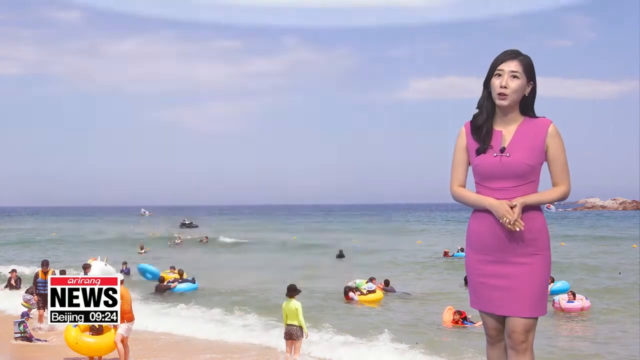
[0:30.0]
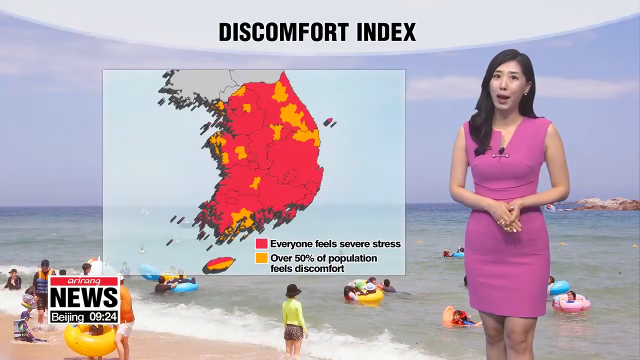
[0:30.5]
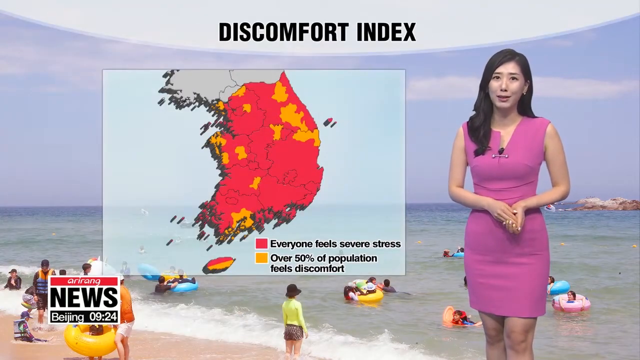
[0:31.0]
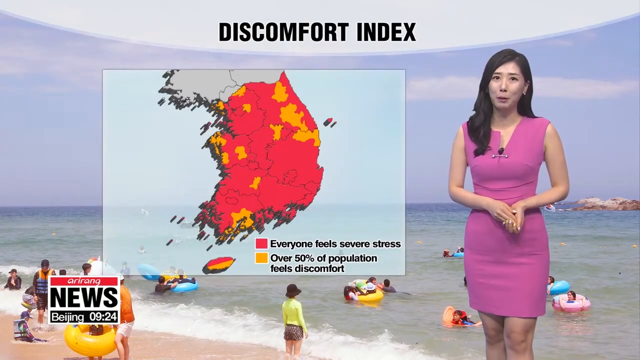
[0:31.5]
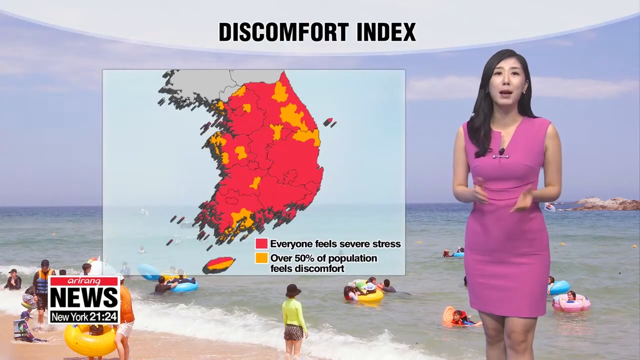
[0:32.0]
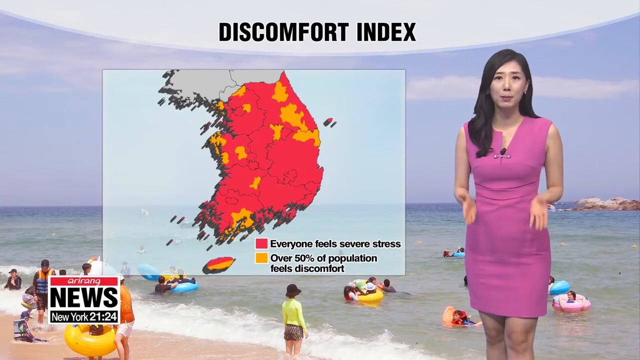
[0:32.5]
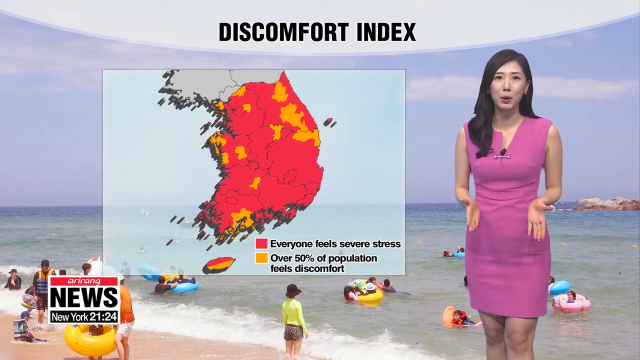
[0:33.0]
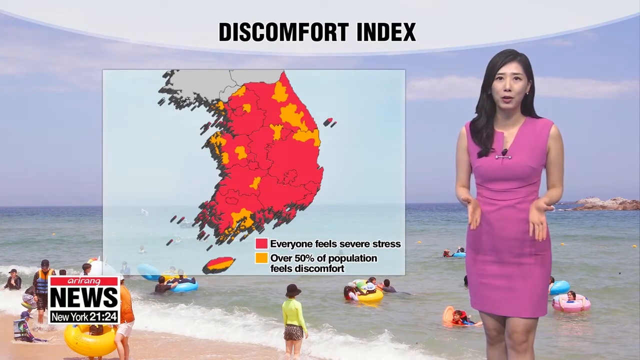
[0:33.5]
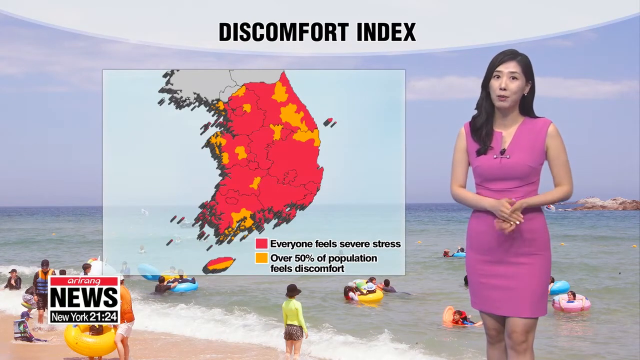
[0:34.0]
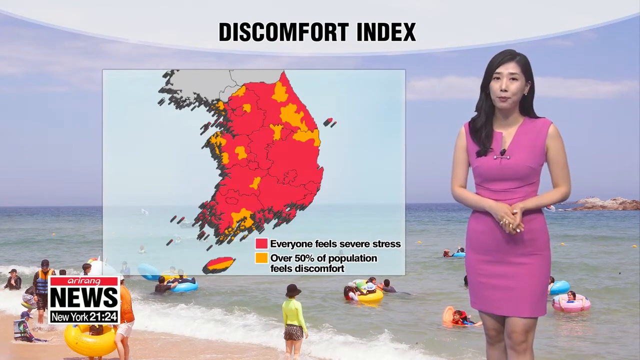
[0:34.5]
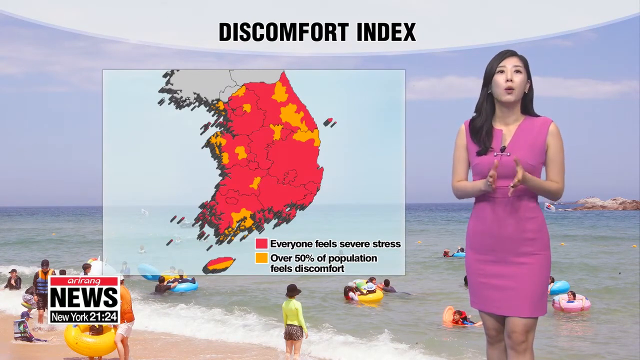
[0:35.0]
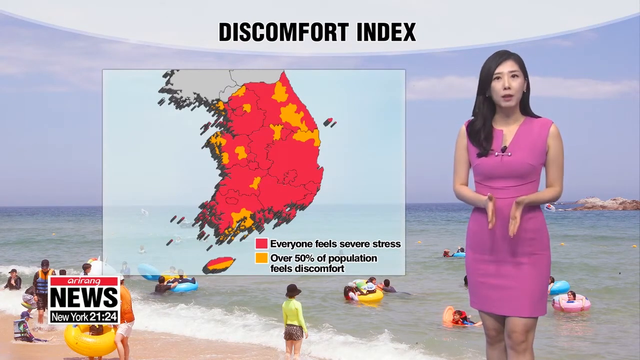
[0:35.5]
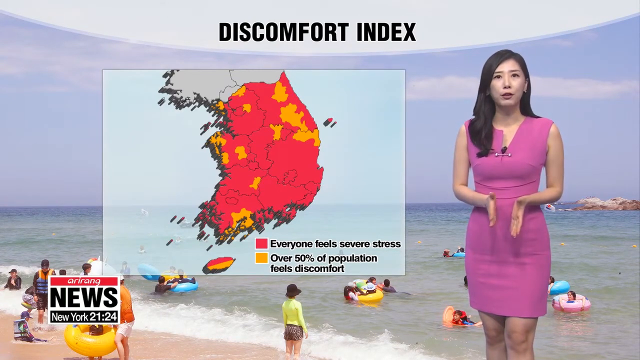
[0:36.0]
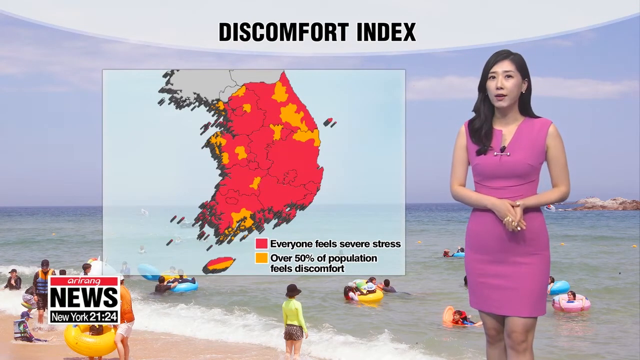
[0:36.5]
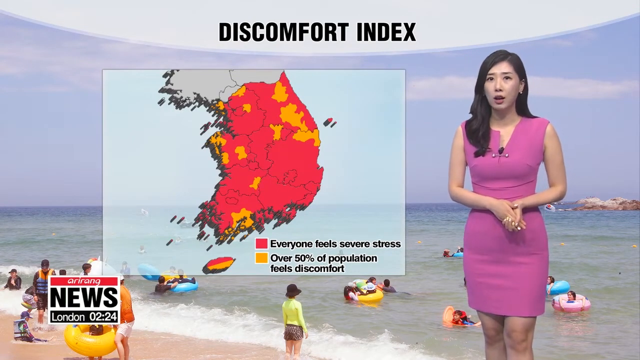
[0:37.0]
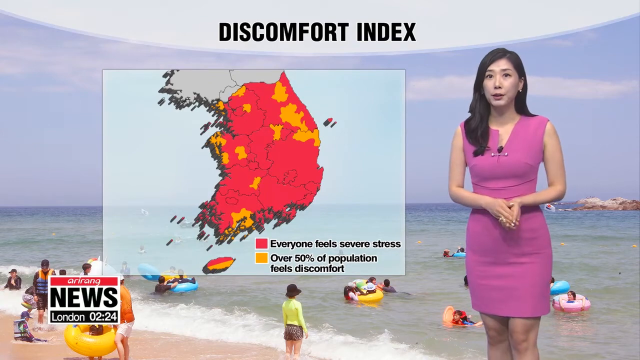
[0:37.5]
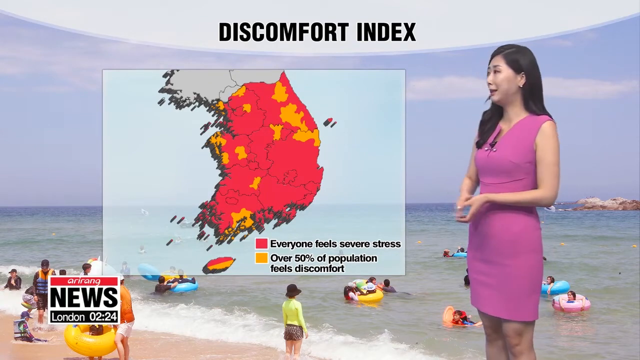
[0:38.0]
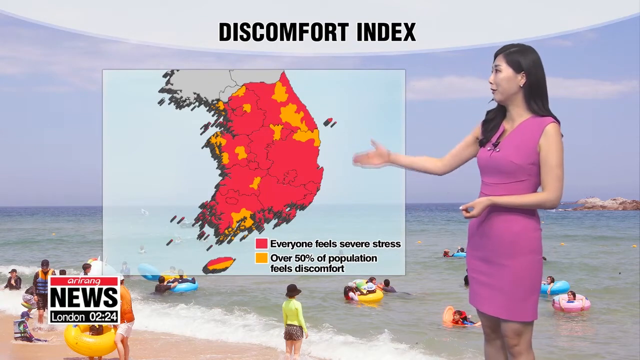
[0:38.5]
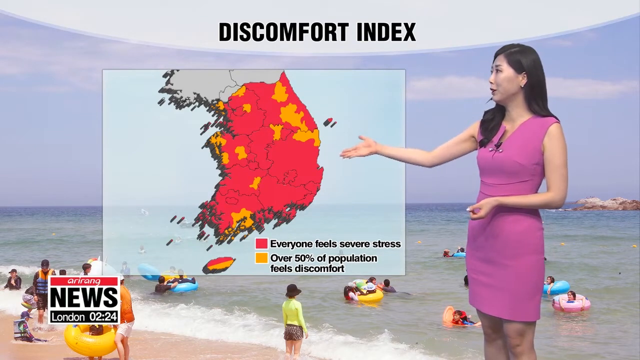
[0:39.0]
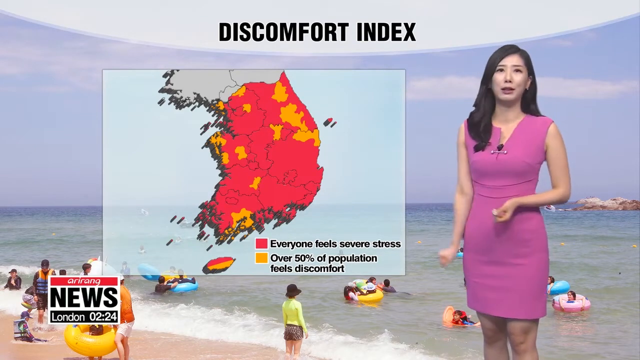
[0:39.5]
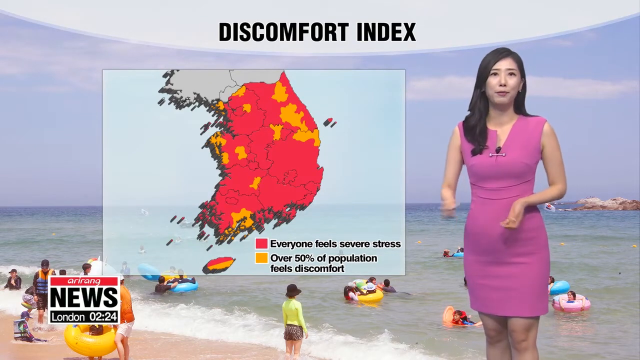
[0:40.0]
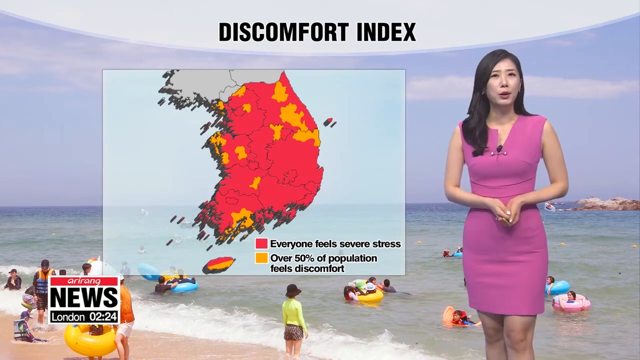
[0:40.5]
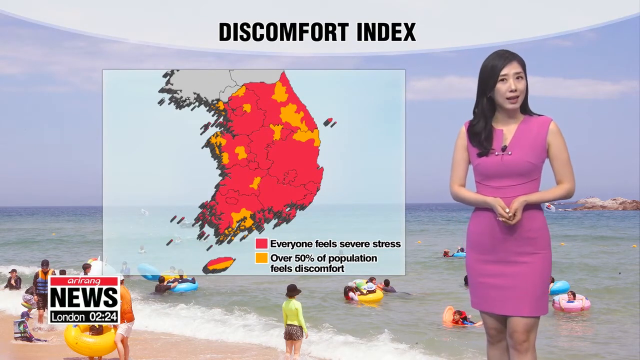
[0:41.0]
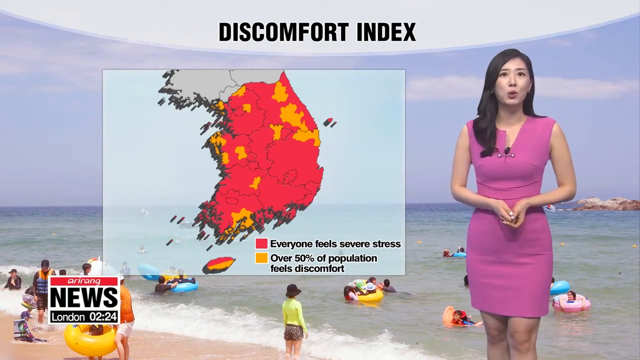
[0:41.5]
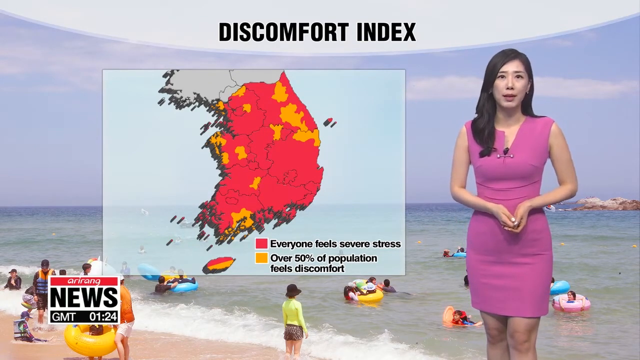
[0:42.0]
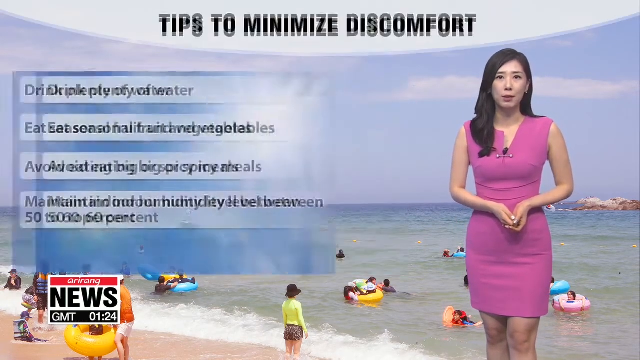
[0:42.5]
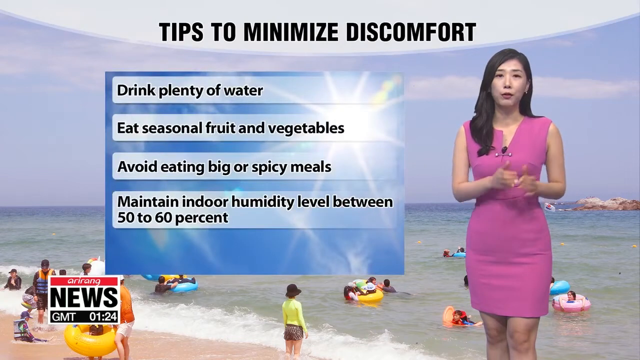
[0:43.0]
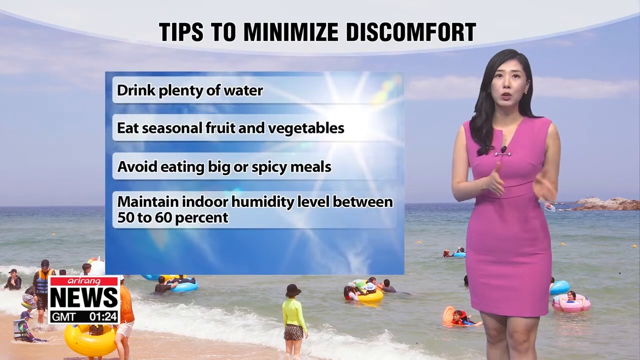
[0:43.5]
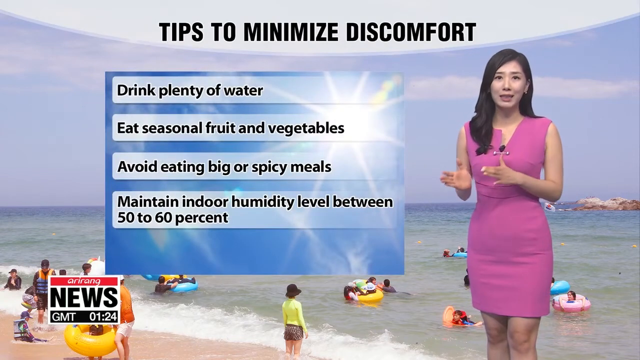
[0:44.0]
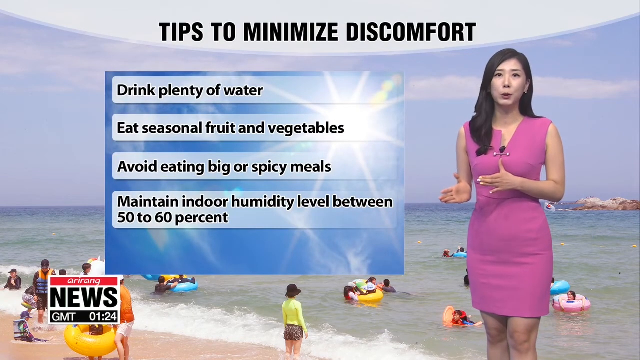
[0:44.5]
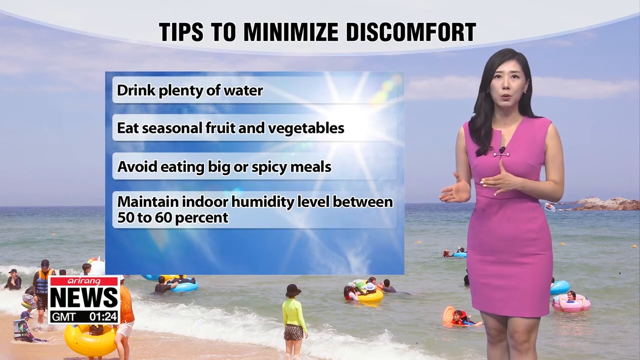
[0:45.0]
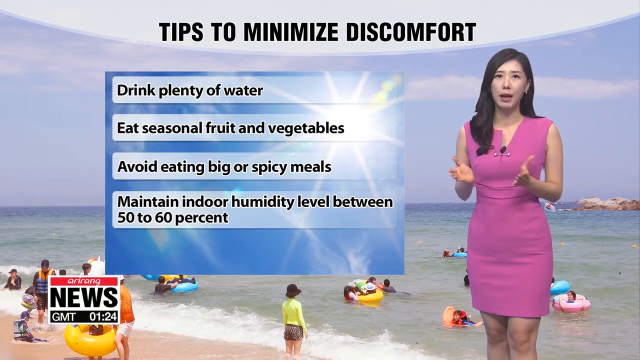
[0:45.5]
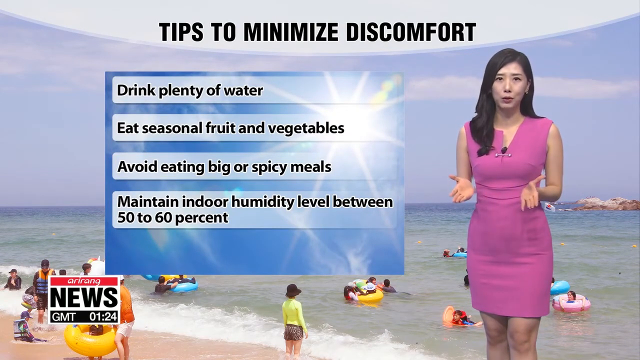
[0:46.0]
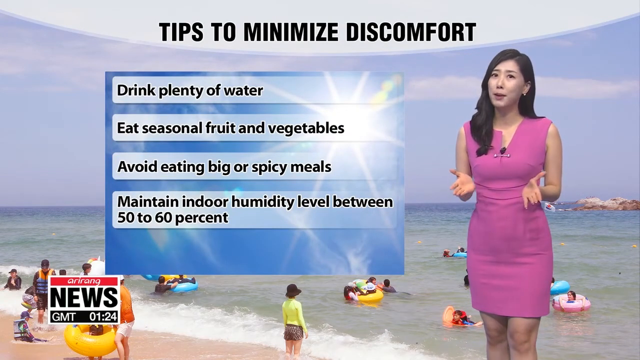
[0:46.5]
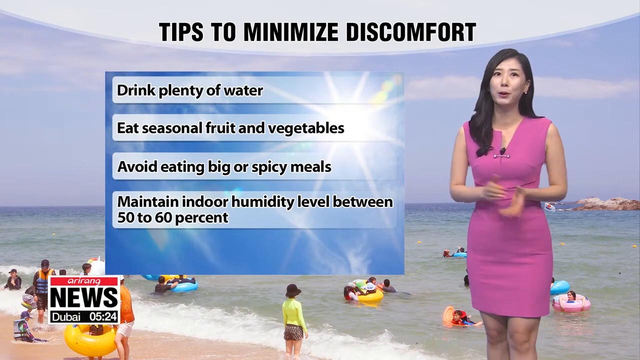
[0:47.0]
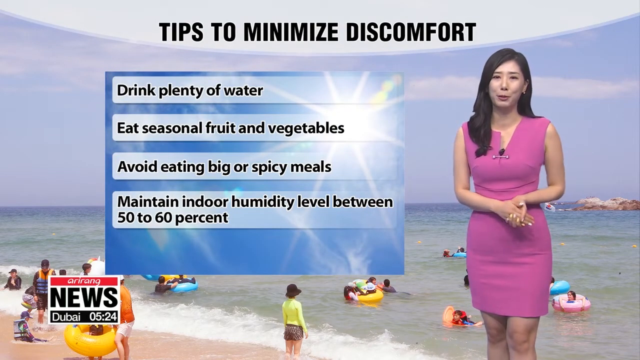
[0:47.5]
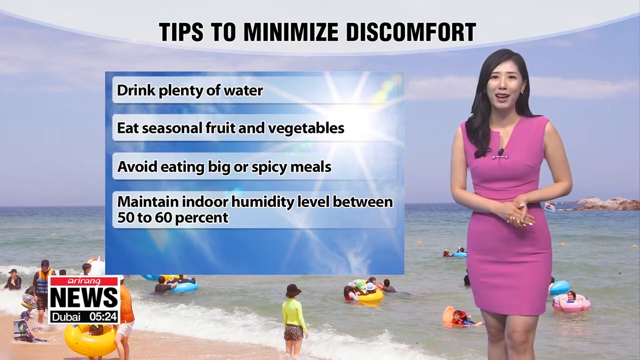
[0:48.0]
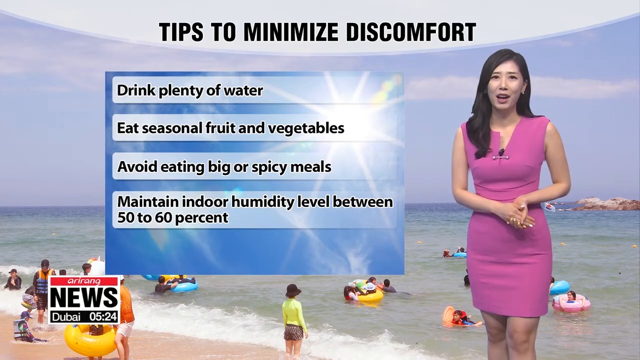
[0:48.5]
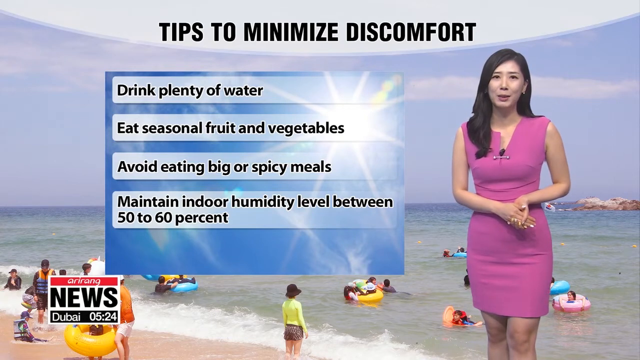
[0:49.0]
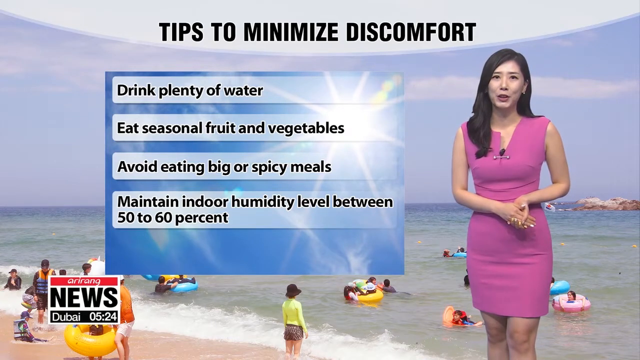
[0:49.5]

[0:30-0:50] The woman with long black hair wears a pink dress with a mic attached to it. She stands, and in the background people at a beach appear to be swimming; some are walking and some are in the water swimming with life jackets. A weather forecast shows the heading "discomfort index" in bold black, with areas of red and areas of yellow on the map. Red represents everyone feeling stress, and yellow represents over 50% of the population feeling discomfort. A news logo in the bottom left of the screen identifies this as a news channel. The woman uses hand gestures and facial gestures as she talks, nods her head, and points at the screen and the map with her right hand. She then gives tips to minimize discomfort: first, drink plenty of water; second, eat seasonal fruits and vegetables; third, avoid eating big or spicy meals; and fourth, maintain indoor humidity level between 50 to 60%.